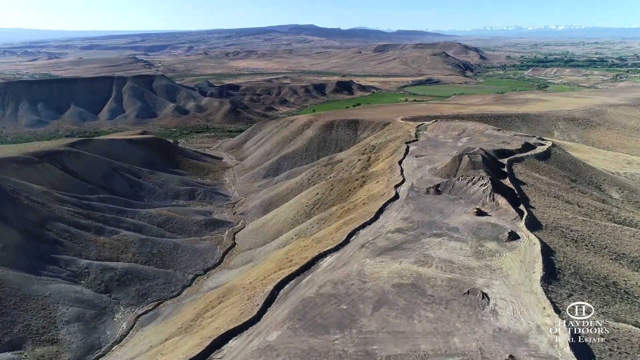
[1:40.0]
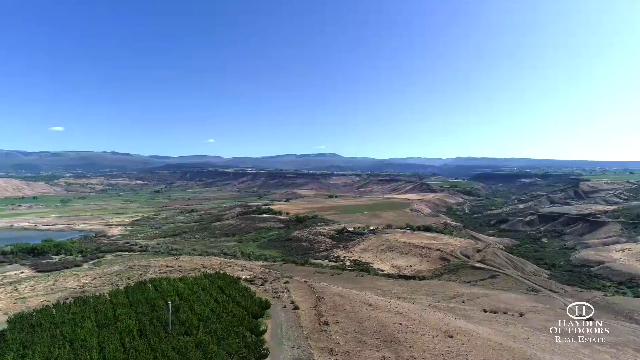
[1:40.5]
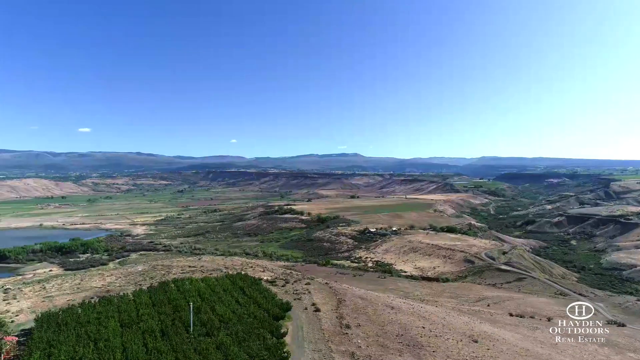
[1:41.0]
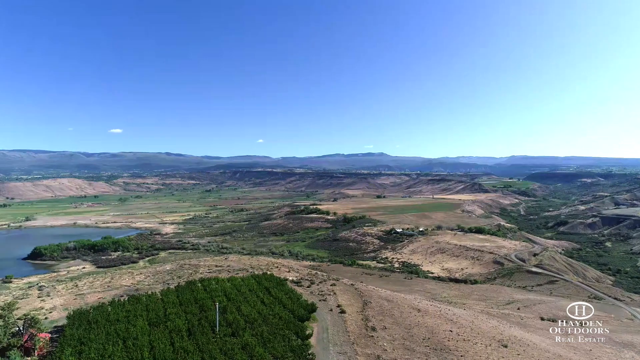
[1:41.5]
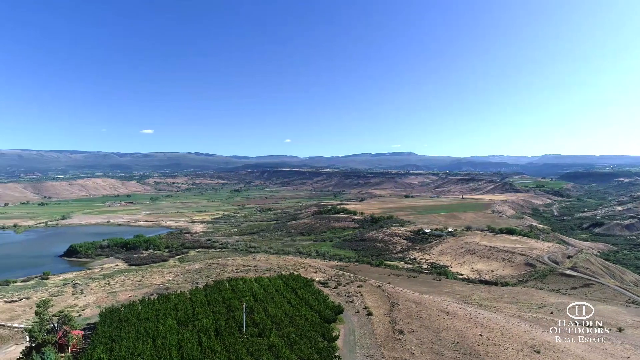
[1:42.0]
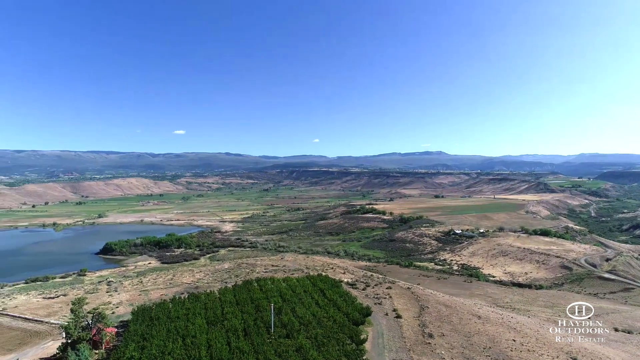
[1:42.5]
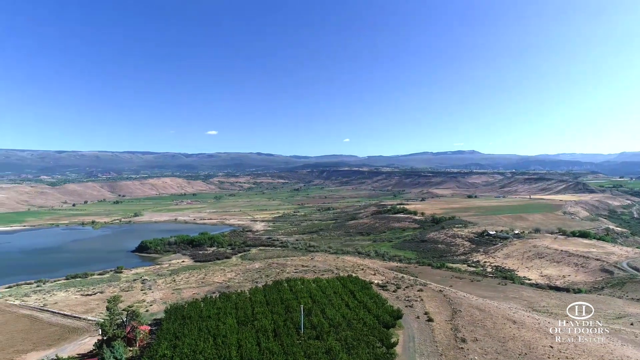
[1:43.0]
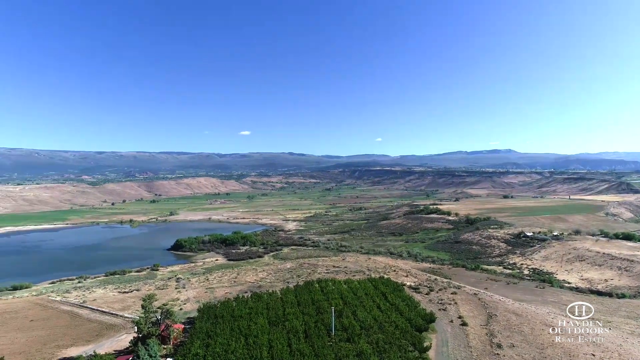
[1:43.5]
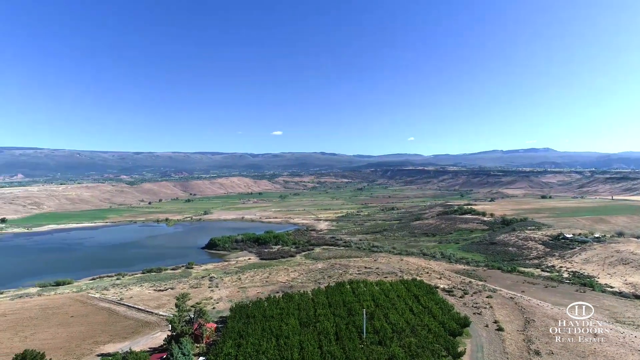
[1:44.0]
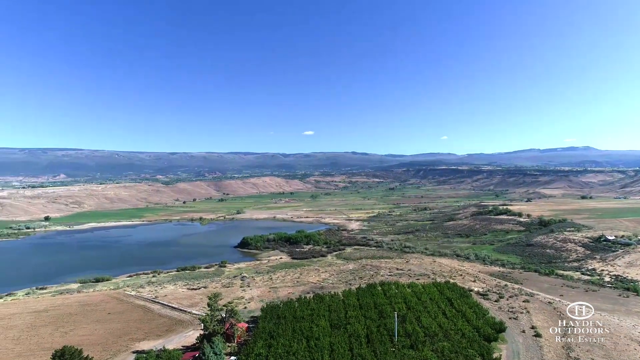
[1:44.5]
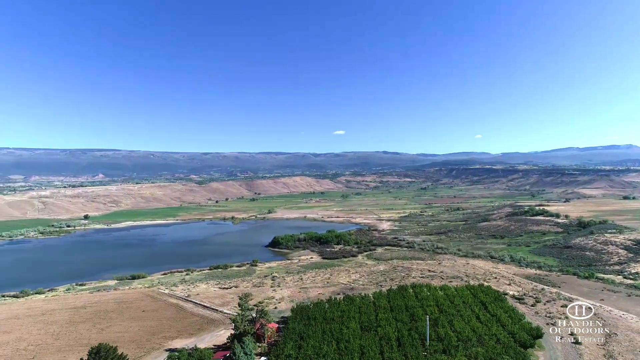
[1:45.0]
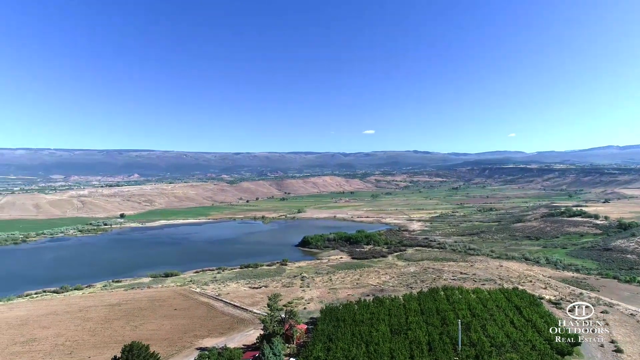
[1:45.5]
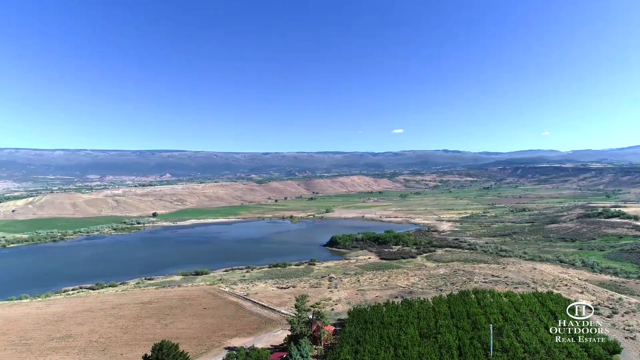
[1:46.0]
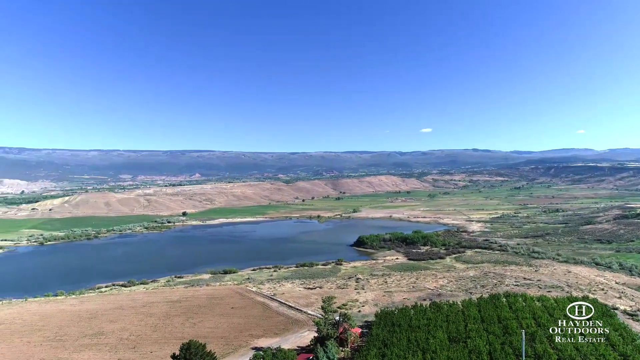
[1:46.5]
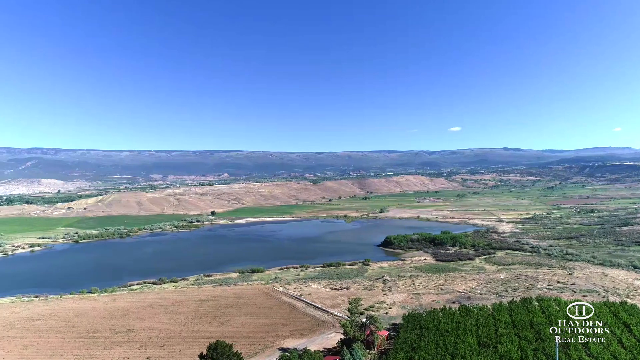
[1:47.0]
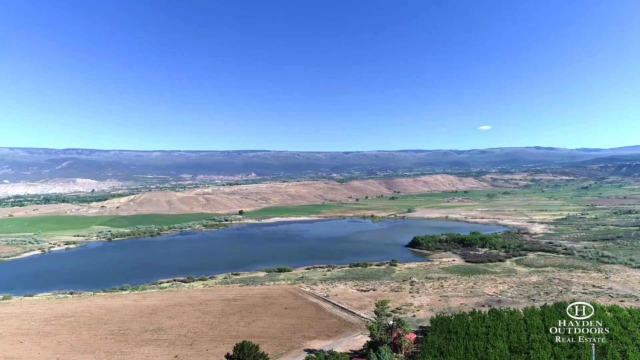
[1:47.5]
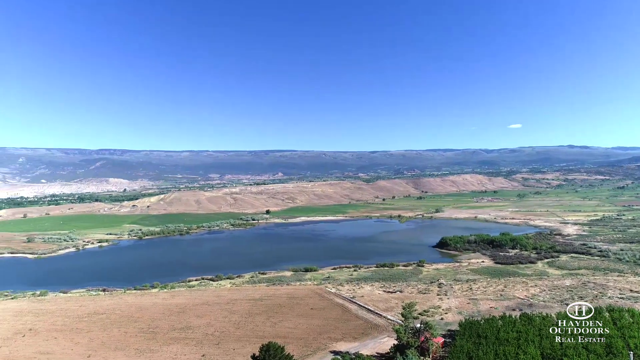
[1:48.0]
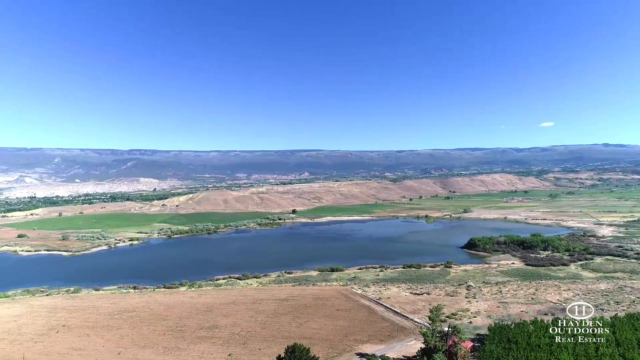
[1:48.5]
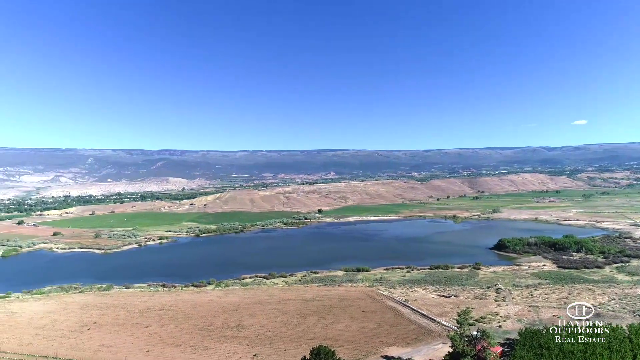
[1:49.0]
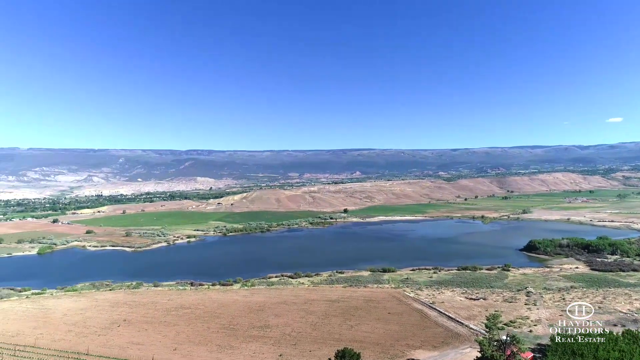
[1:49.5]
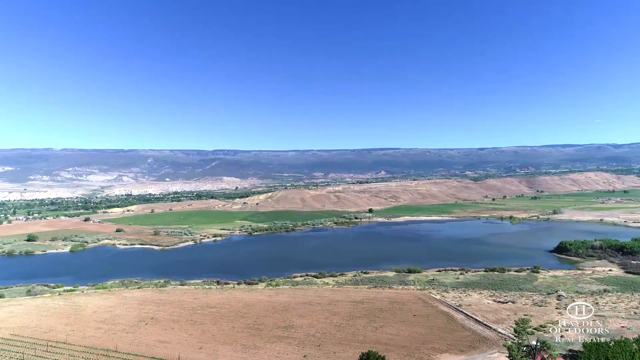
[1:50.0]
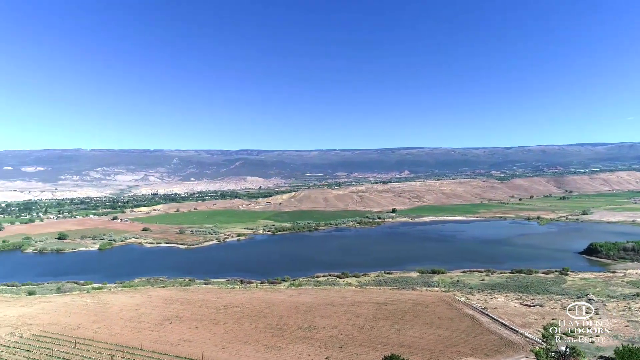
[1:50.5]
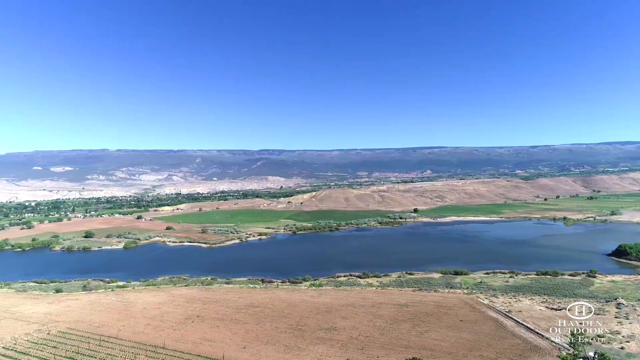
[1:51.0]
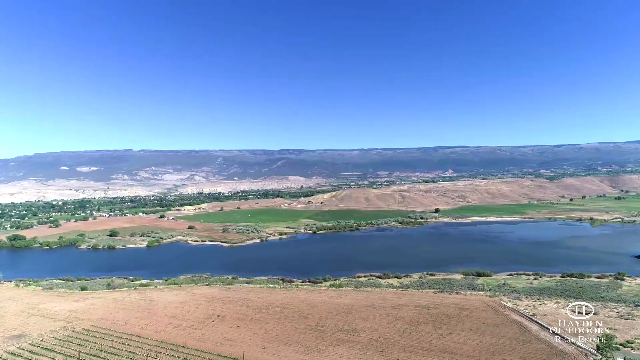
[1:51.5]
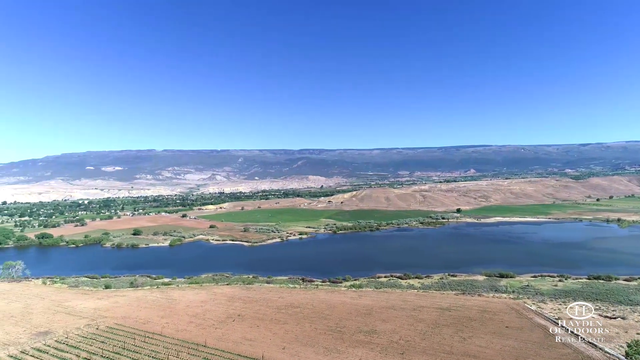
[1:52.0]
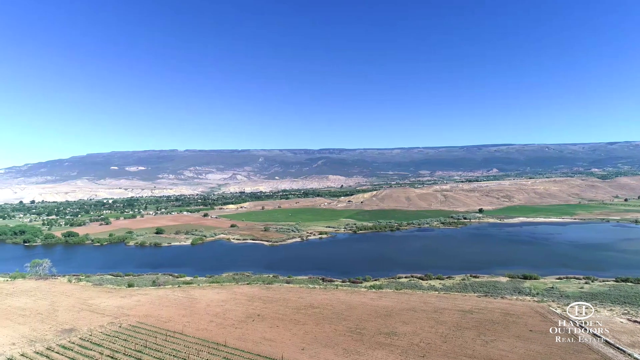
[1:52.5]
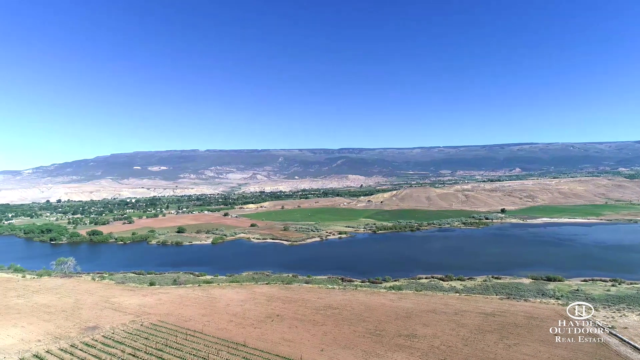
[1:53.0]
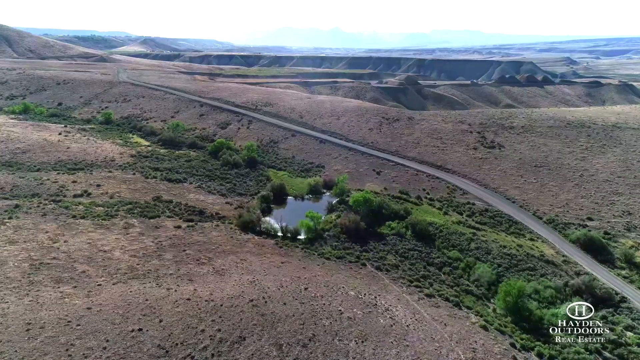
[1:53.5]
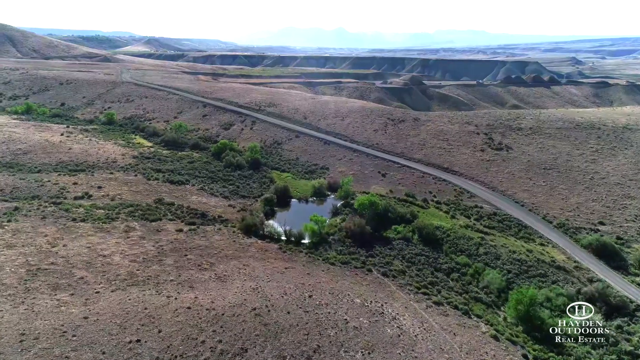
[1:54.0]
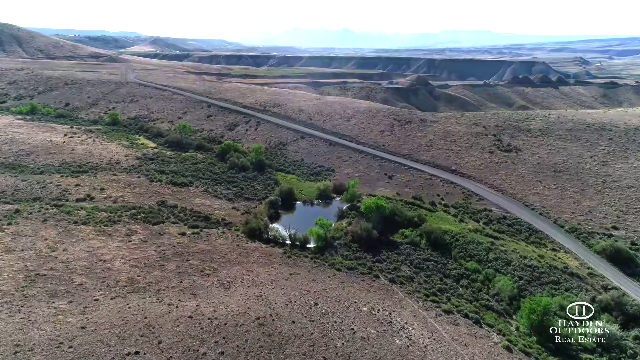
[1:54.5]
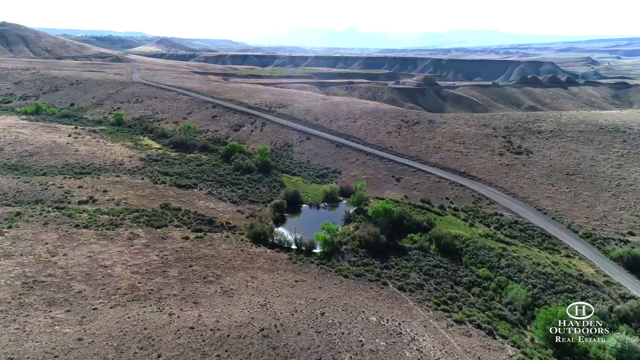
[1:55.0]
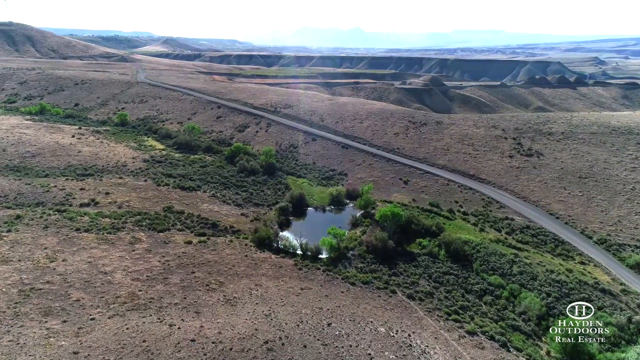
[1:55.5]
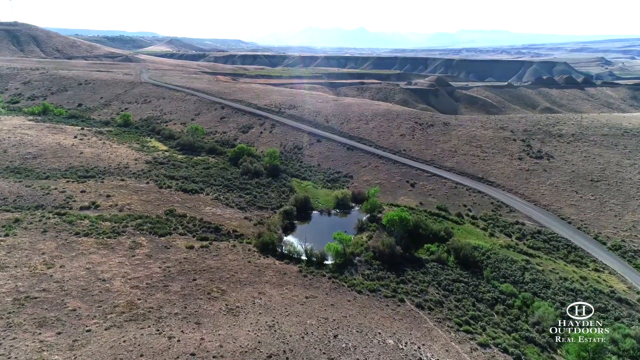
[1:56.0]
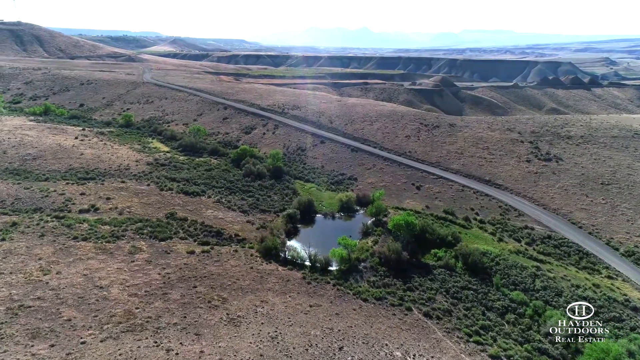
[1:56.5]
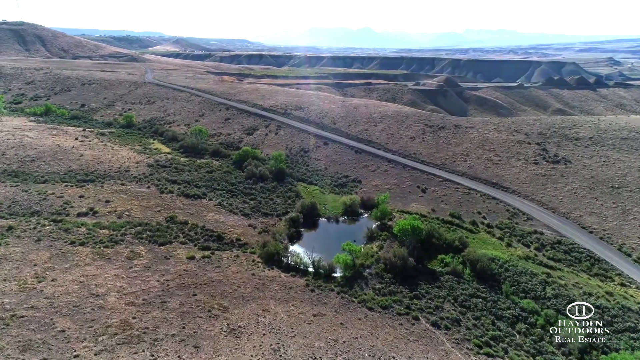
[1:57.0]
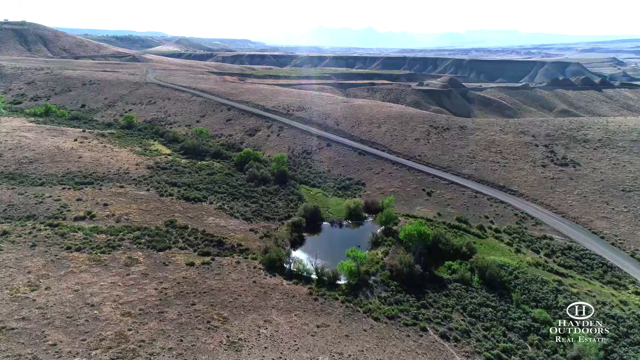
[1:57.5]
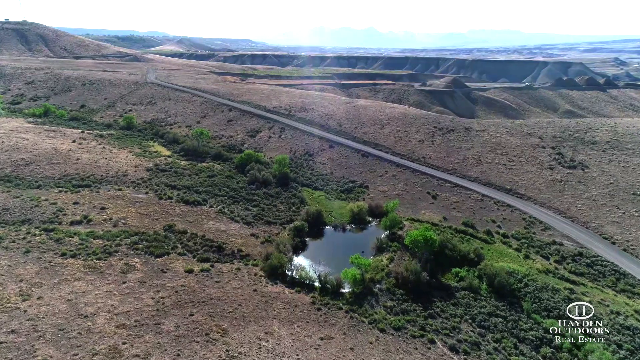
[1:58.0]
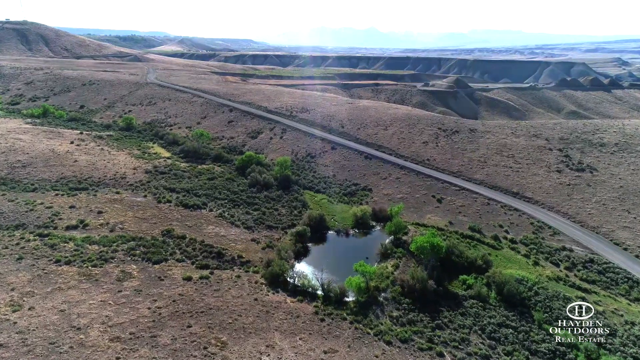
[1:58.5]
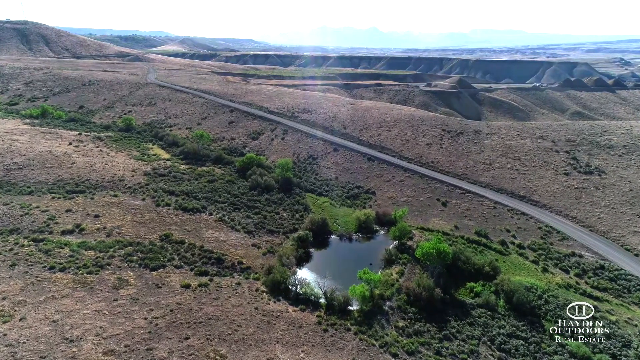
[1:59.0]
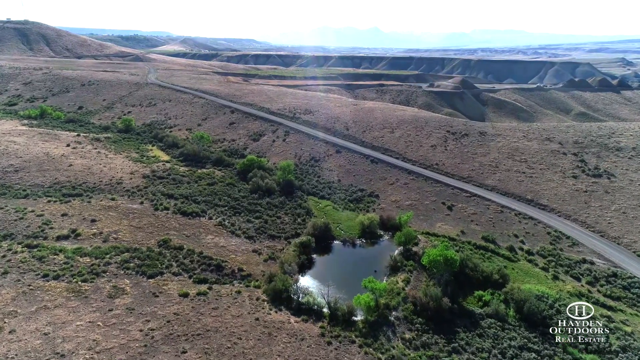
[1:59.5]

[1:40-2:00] More panoramic views show a really blue sky with hardly any cloud cover. There looks to be a very blue lake, with green fields around it. The next shot shows a small pond with a dirt track running along its right-hand side. Most of the land is dried-out dirt with a brown or gray colouring, but the farmed areas are clearly visible from a distance because they are very bright green with crops that seem very healthy. No people appear; the shots are apparently drone aerial imagery of the area around the property.